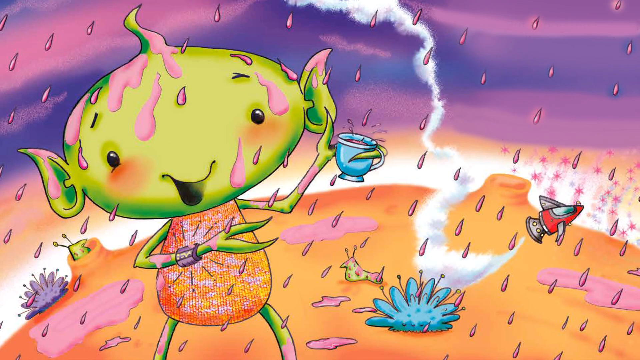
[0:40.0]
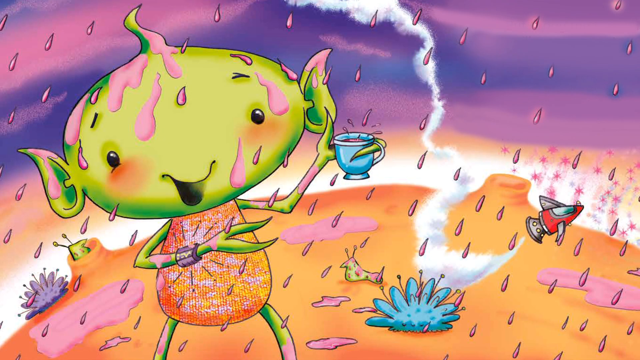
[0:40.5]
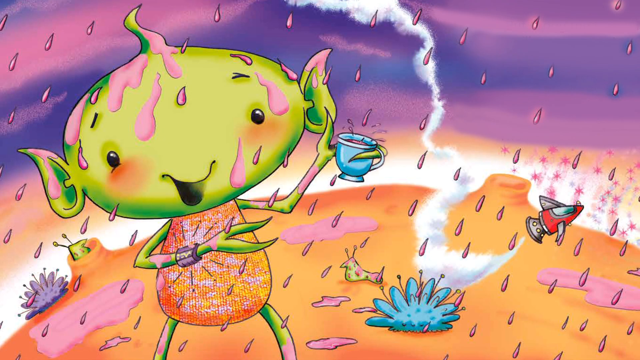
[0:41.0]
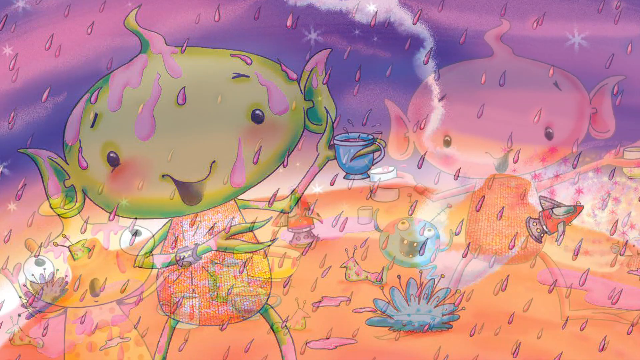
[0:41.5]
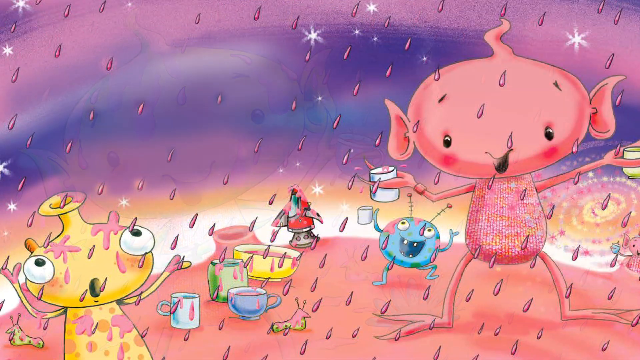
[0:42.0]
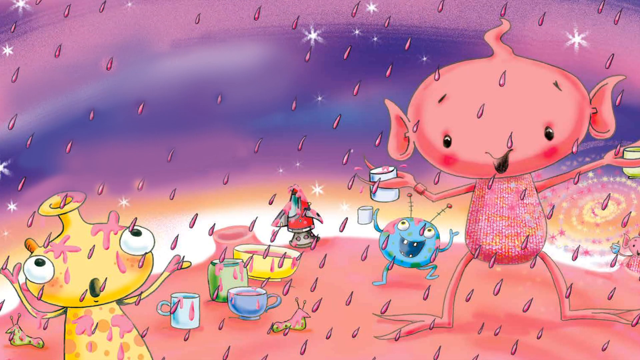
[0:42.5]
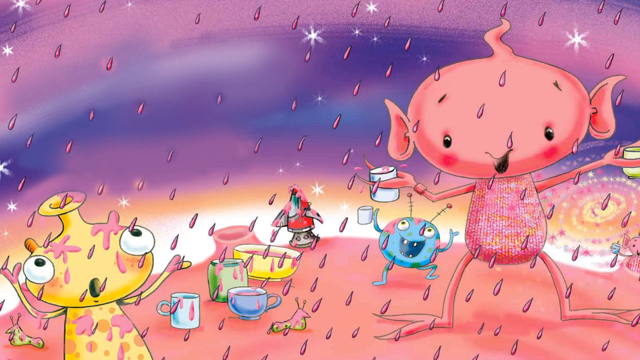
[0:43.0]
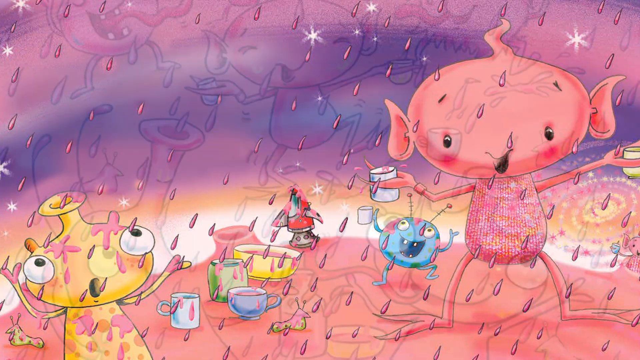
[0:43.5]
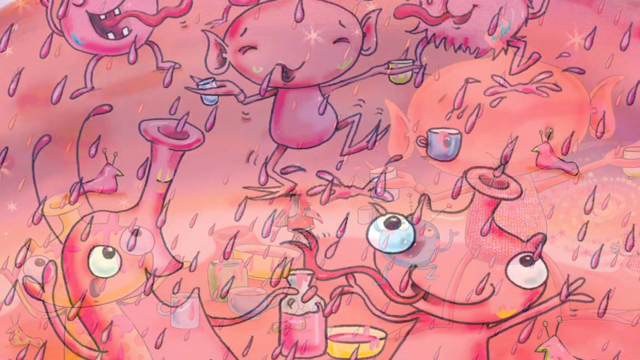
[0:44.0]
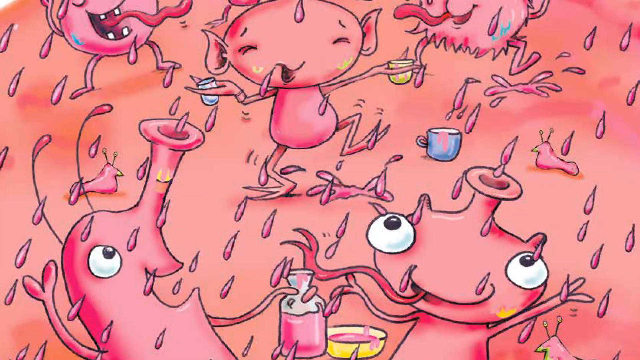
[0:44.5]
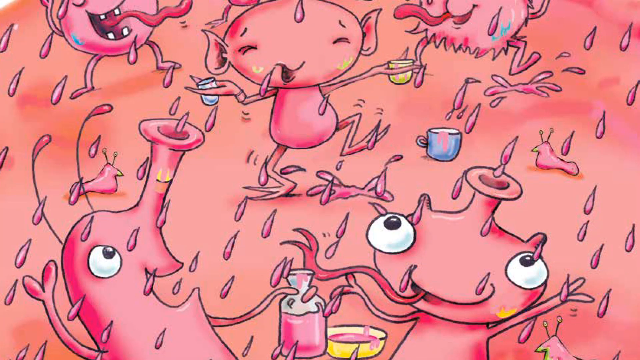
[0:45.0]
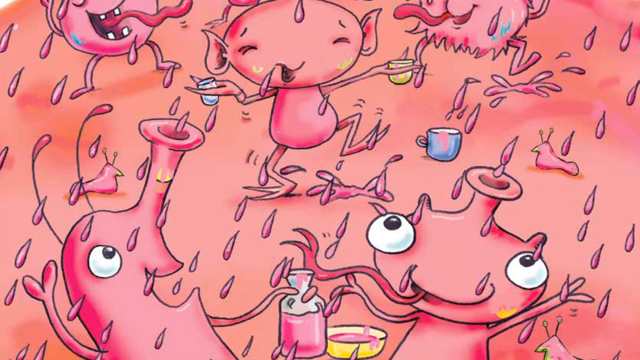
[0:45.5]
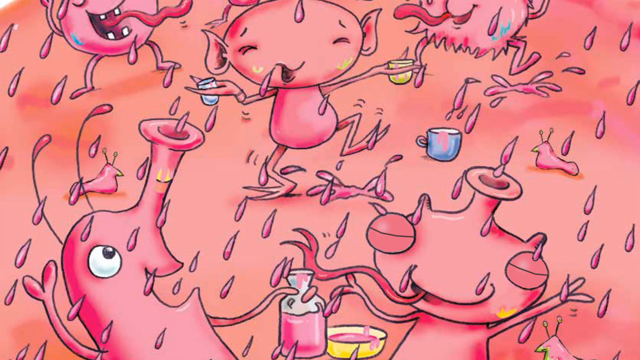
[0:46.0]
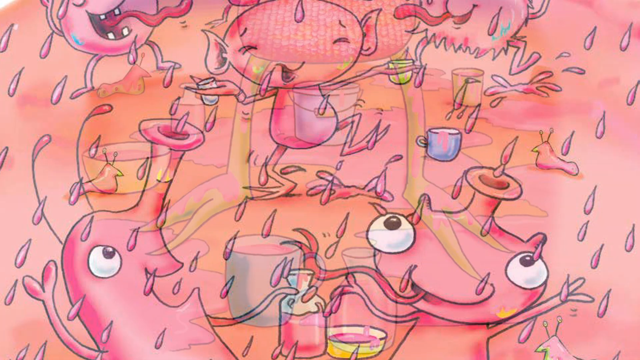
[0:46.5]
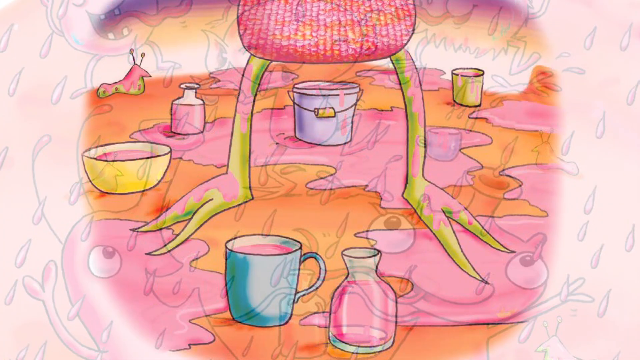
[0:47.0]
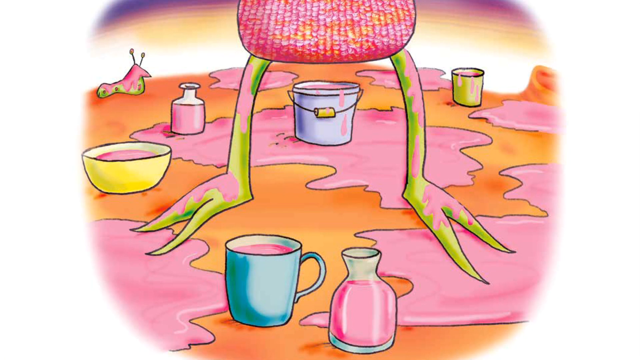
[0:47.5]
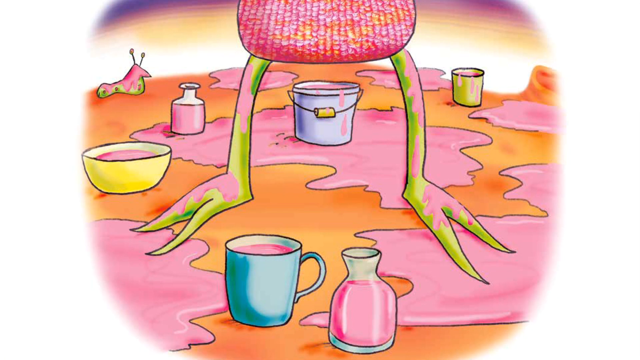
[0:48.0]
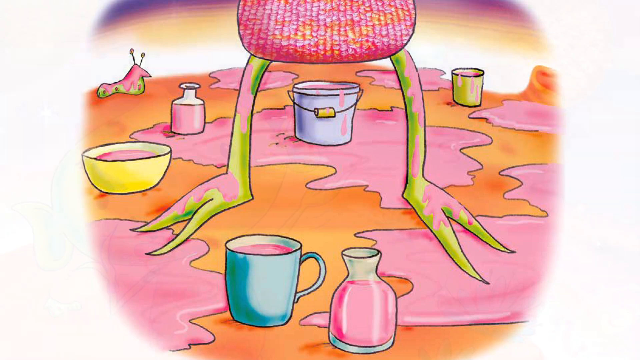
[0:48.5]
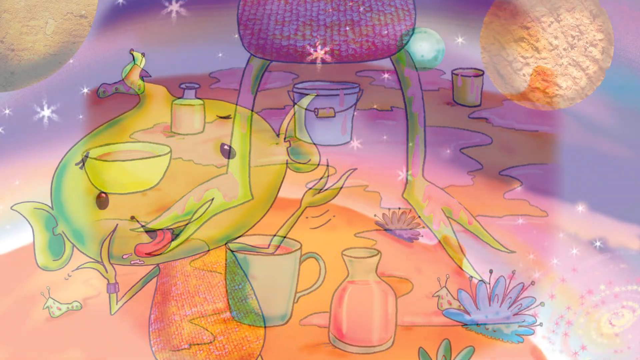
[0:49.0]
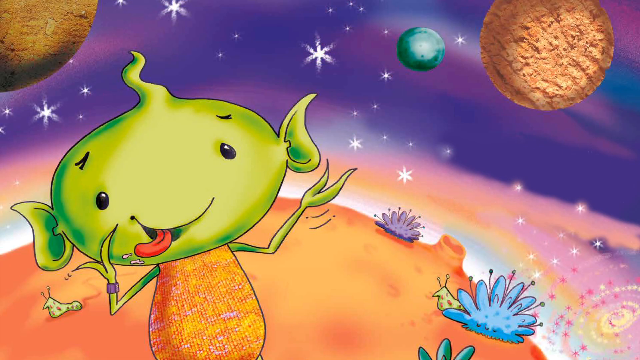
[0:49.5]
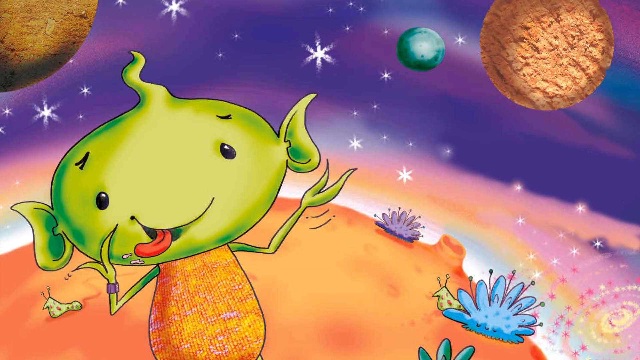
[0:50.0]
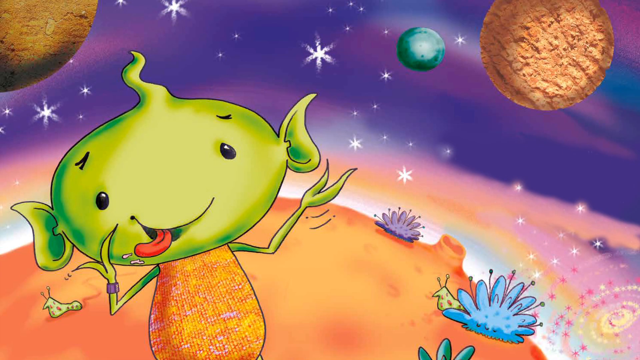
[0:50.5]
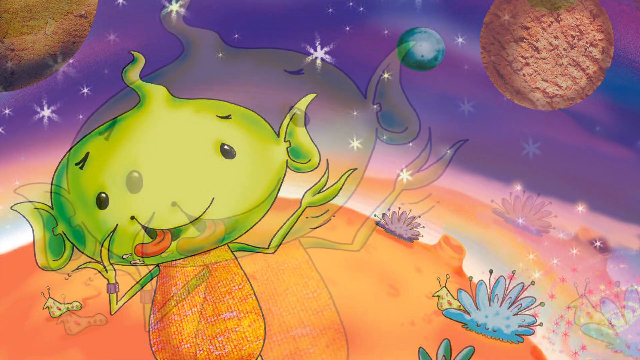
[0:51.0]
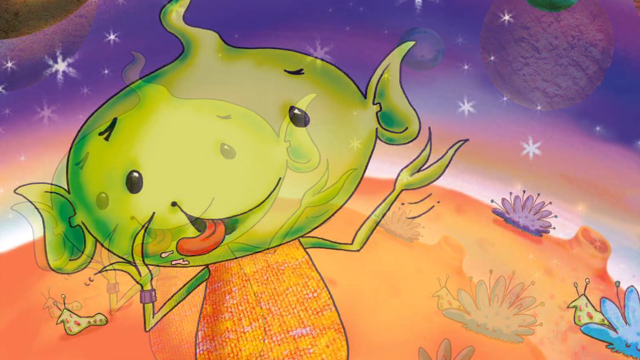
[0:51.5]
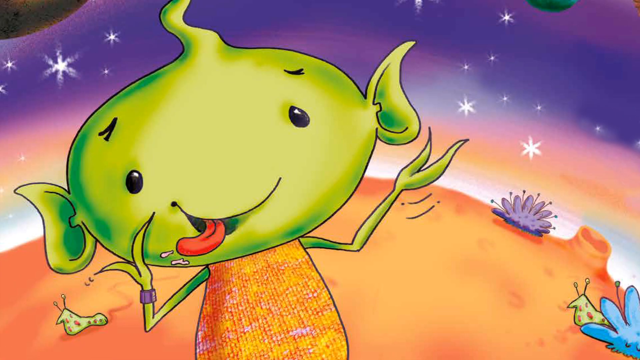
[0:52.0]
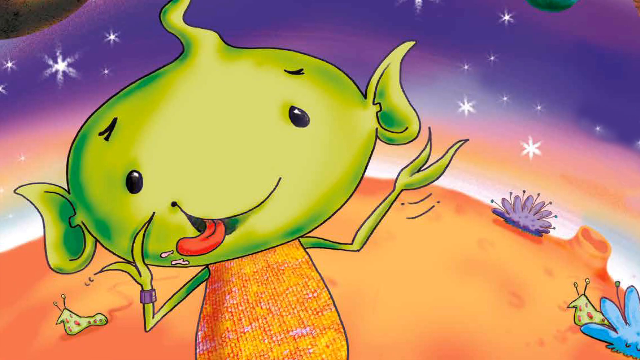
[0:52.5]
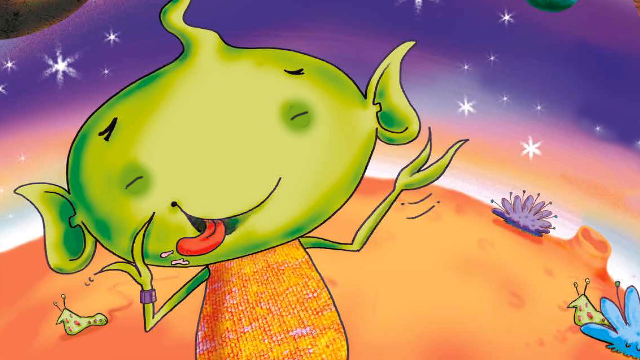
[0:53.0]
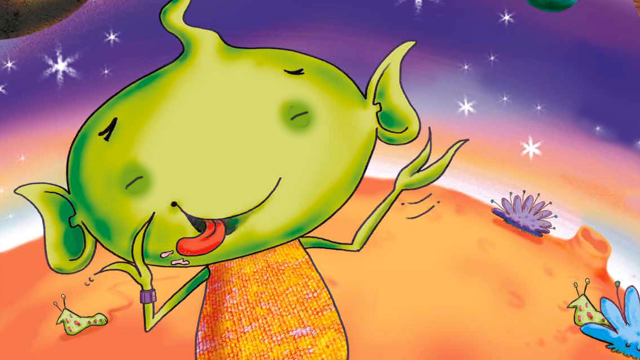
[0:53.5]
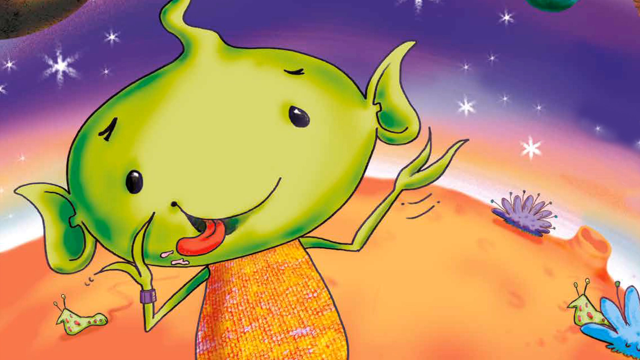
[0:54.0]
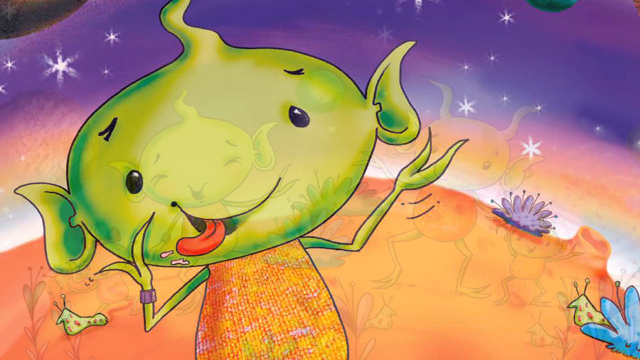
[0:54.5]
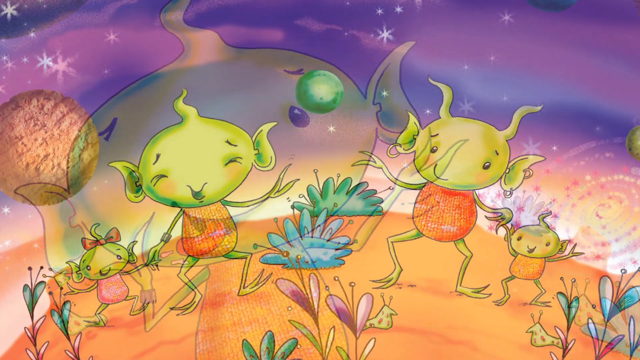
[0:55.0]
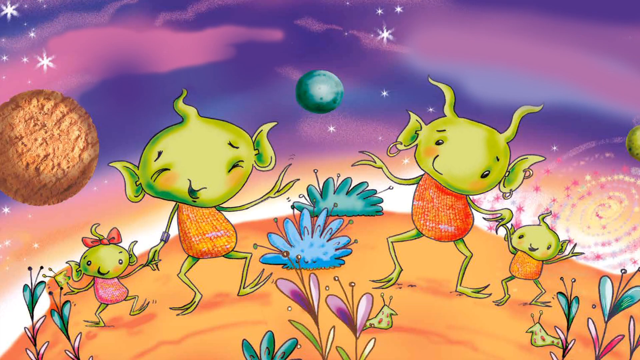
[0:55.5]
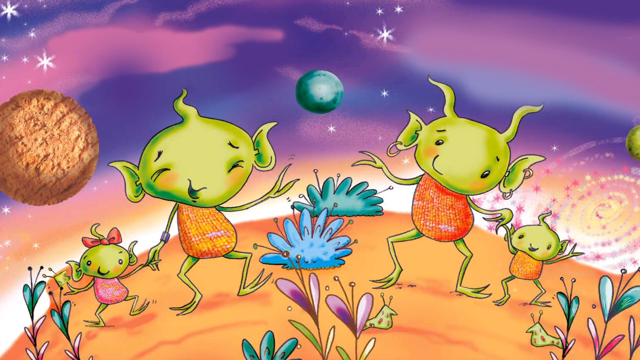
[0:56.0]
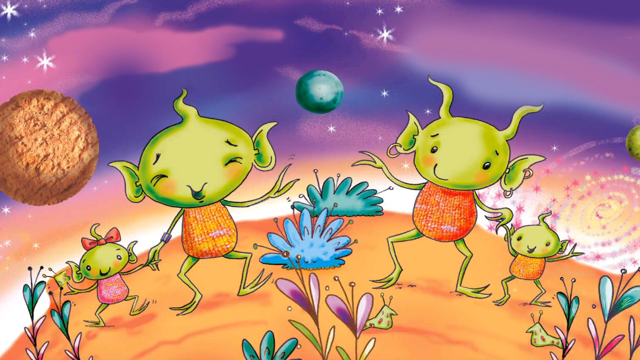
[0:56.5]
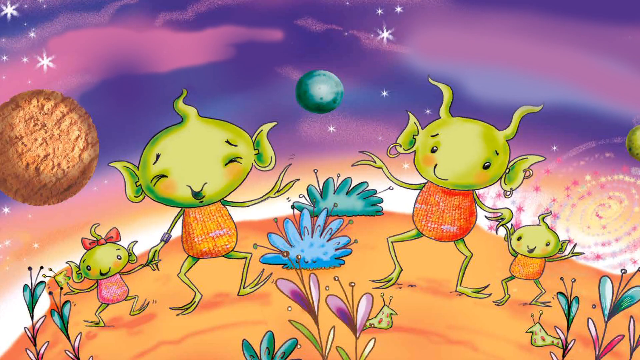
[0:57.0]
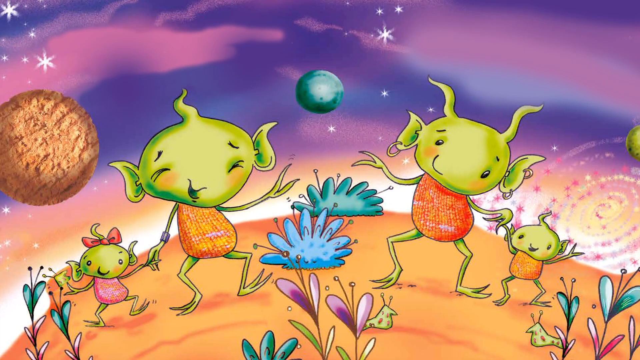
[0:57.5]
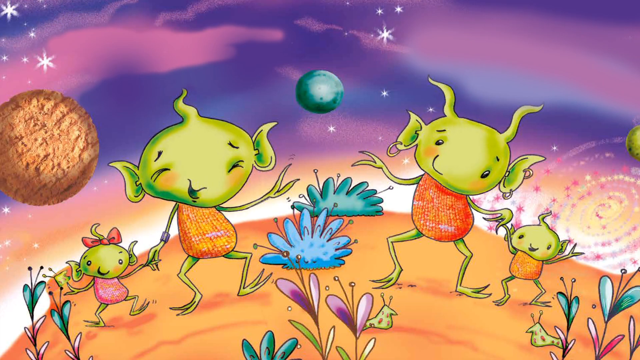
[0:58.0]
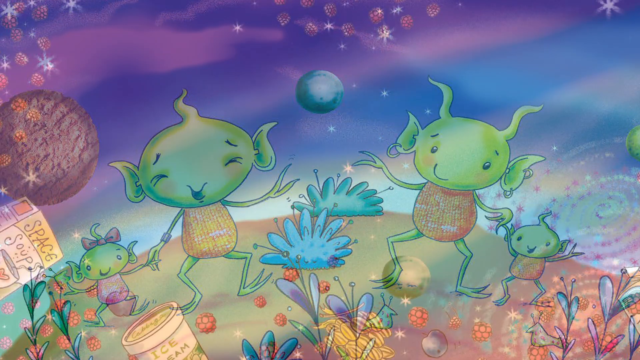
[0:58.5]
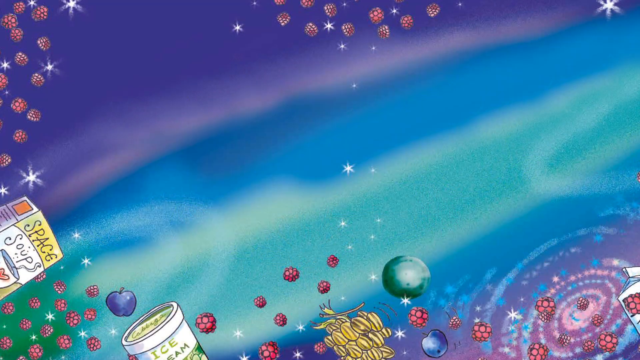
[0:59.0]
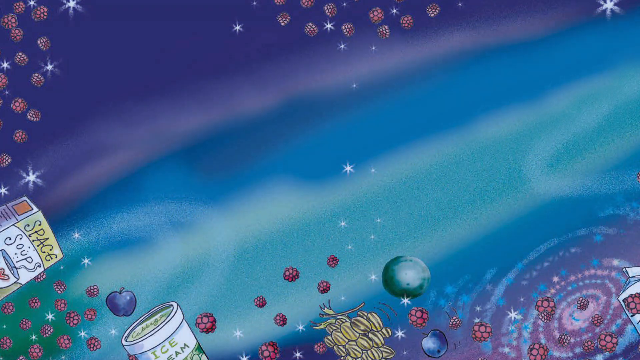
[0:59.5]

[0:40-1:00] A pink rain-like substance falls from the sky onto the green alien. He smiles and holds a blue mug up, apparently catching the drink in it. His little friends appear happy that it is raining pink fluid, using all kinds of buckets and cups to catch it, and they seem to dance as the pink fluid apparently floods their homes. Everyone uses every container they can find to catch it. They appear to be on a very small planet with other planets nearby. The sky is in hues of purple and orange while the pink rain comes down.